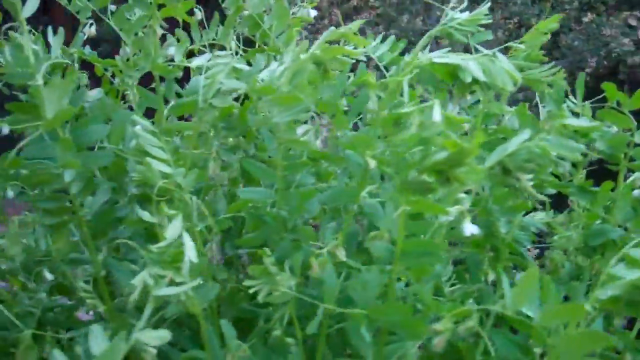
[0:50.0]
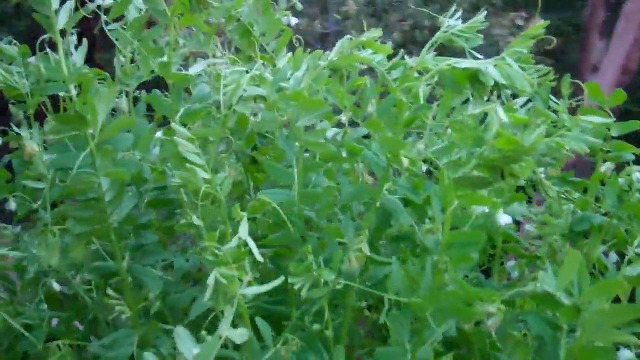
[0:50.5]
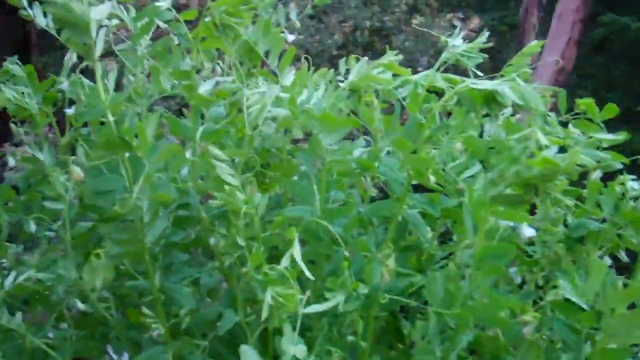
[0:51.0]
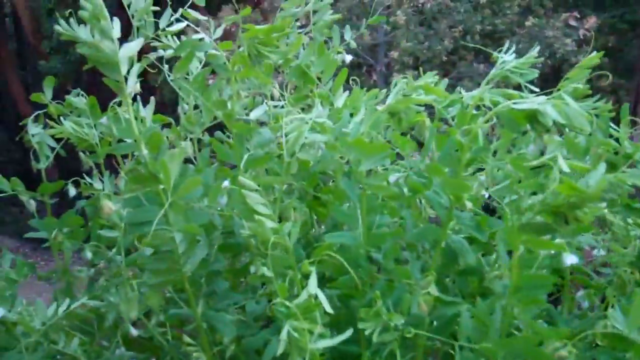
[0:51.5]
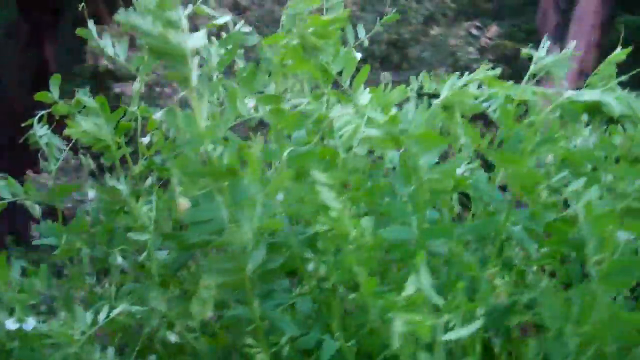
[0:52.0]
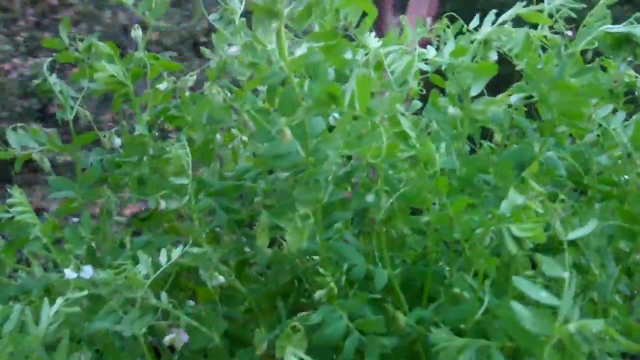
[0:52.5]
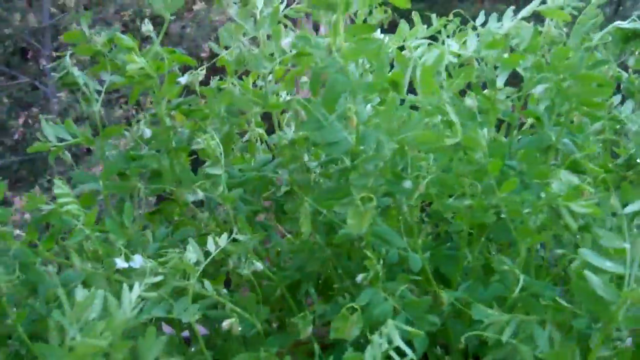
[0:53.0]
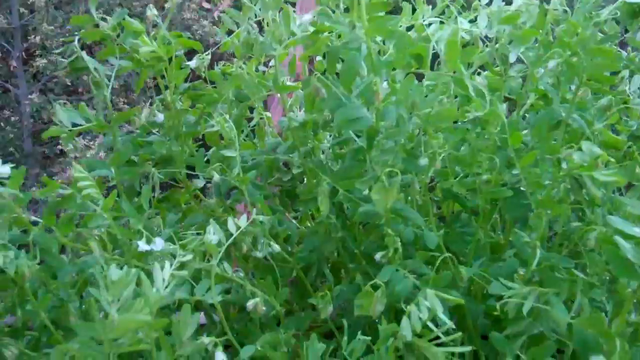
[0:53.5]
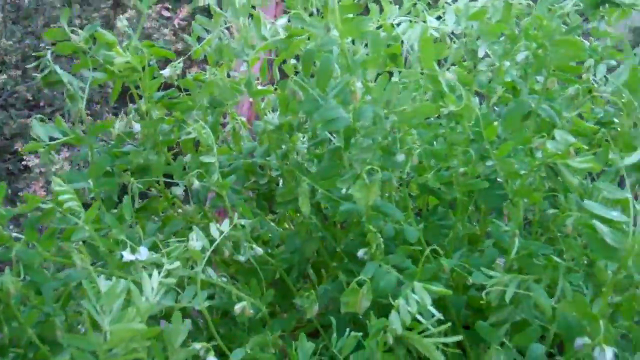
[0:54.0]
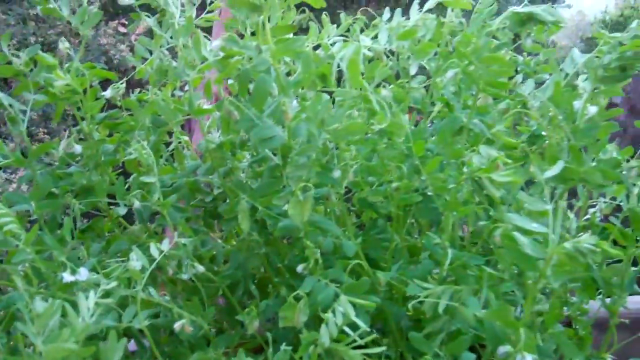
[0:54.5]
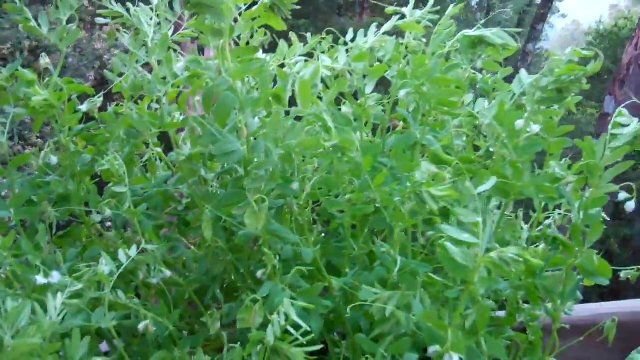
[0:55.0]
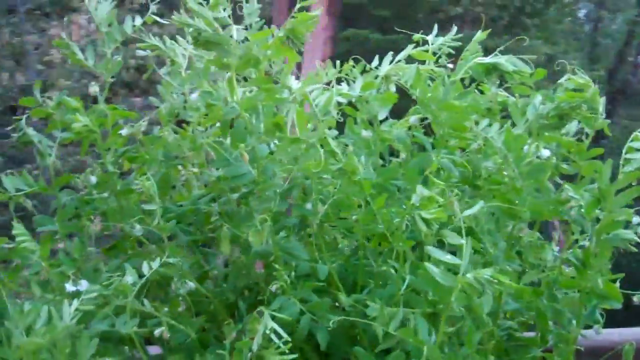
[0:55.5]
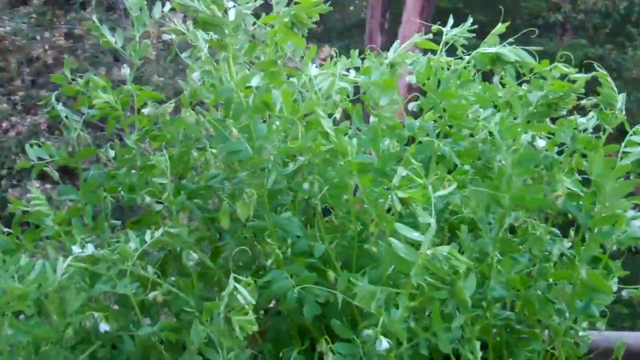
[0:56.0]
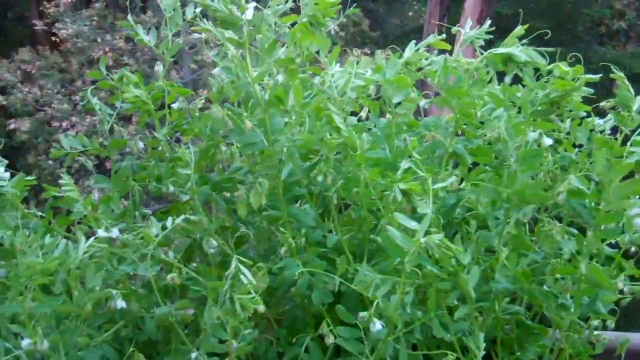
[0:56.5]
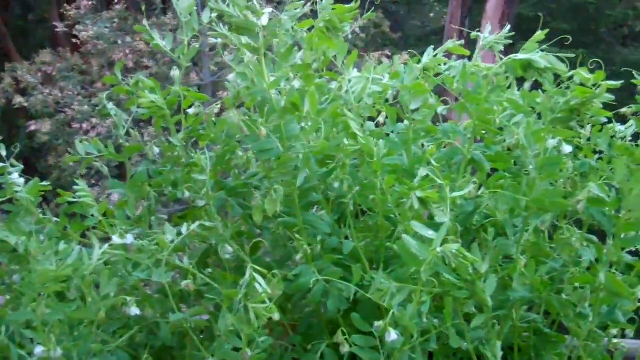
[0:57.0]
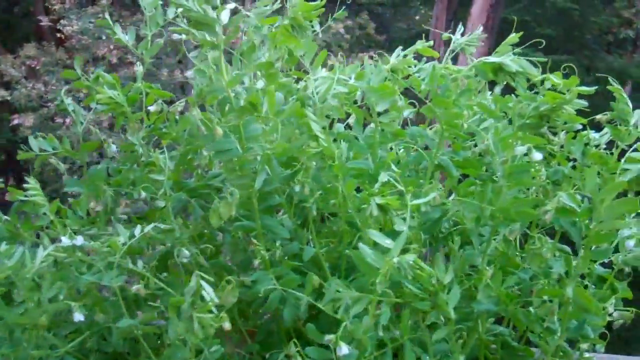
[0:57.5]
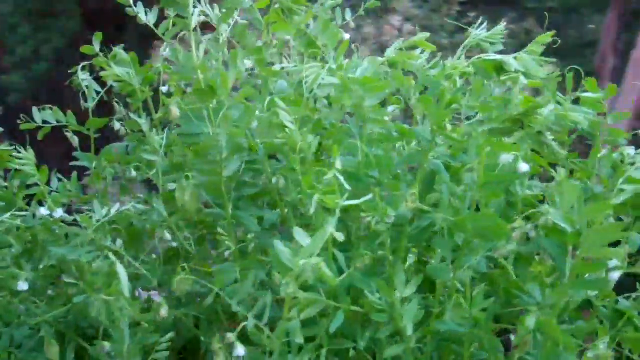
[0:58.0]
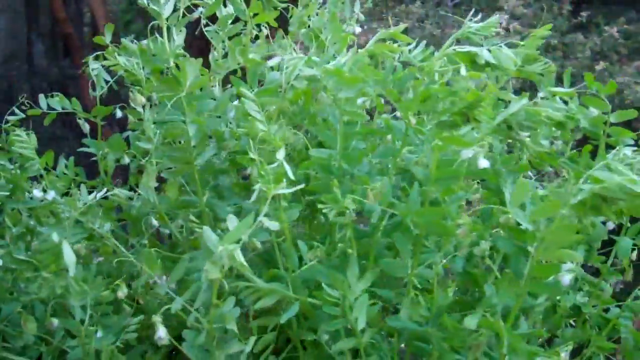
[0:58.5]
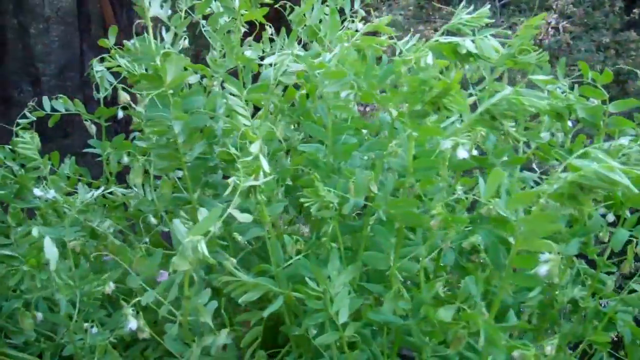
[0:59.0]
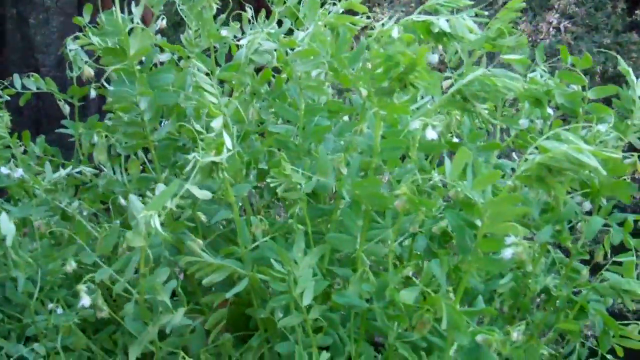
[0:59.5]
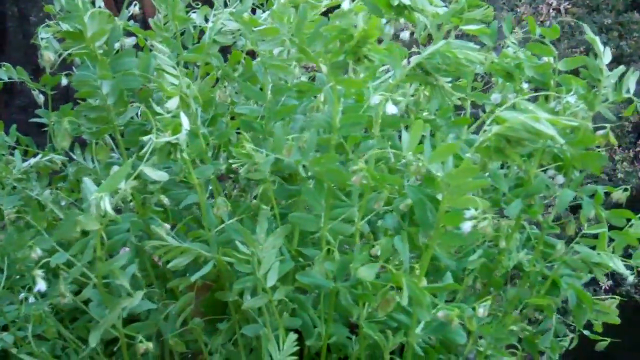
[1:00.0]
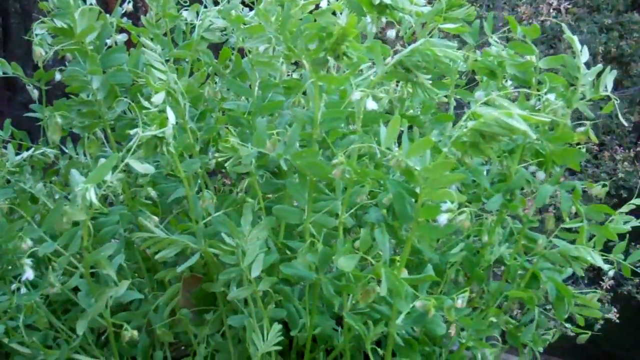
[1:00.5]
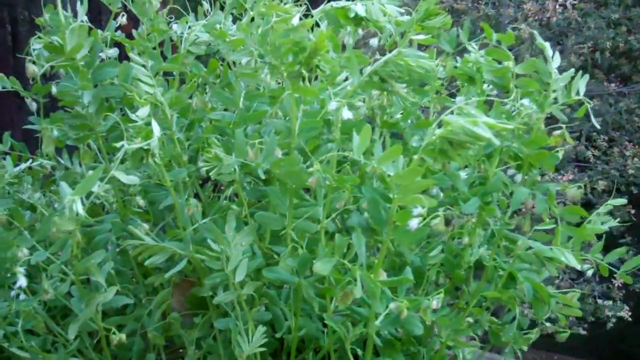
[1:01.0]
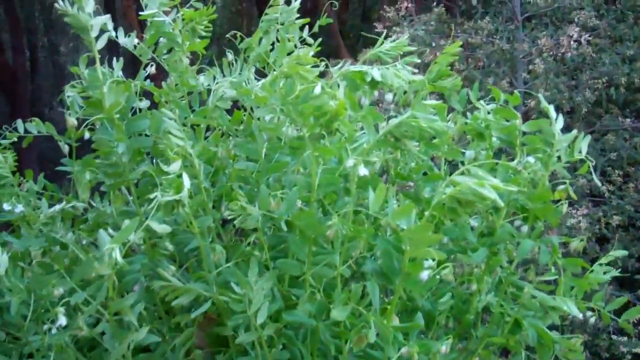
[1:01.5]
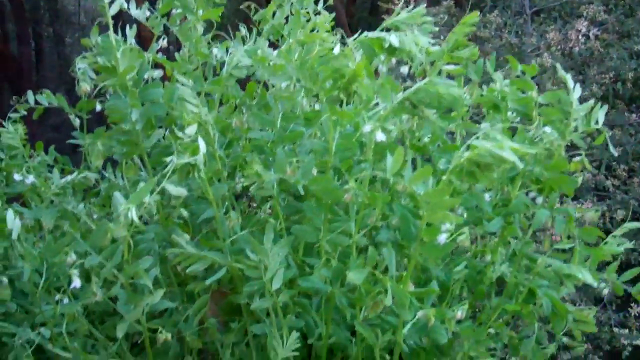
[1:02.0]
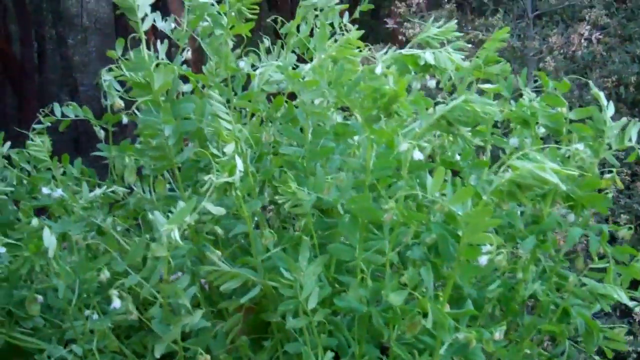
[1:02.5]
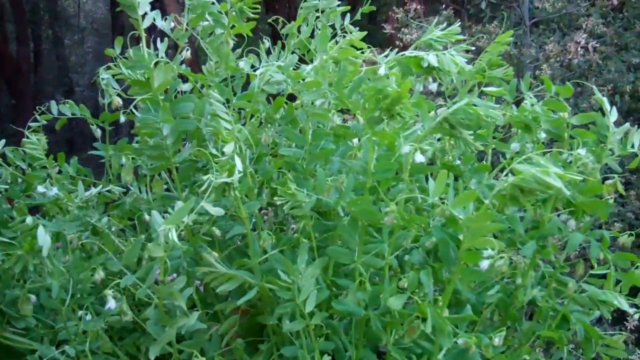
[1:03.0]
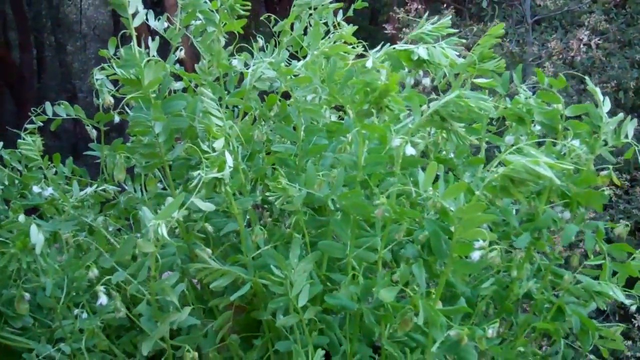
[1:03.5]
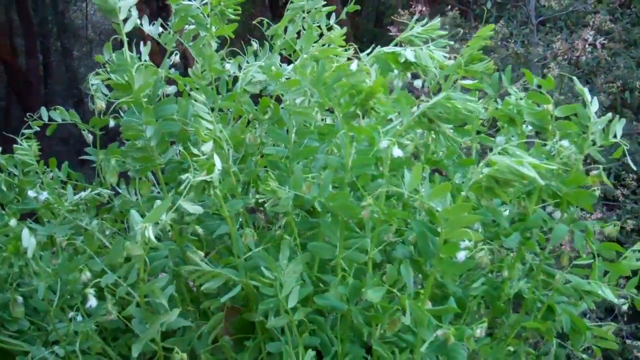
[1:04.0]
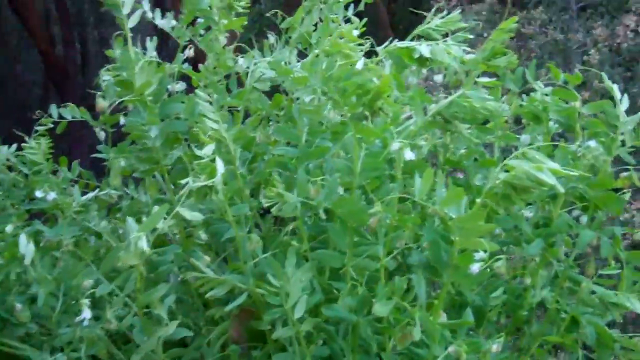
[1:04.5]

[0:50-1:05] The man rotates around the potted plant of presumably lentils, showing it from different angles. A brief panning shot moves back and forth across the lentils, from left to right. The man does not appear in the video; the potted plant remains the focus. The background is still, with a couple of brief shots of the forest.